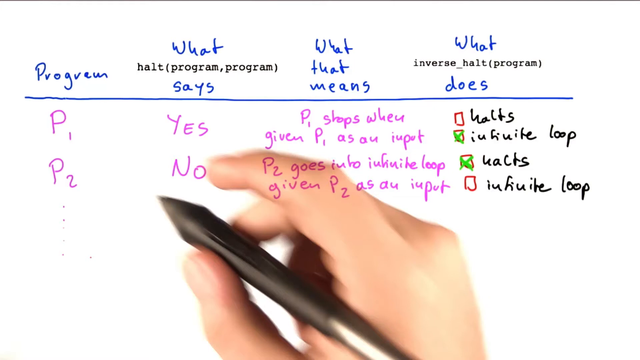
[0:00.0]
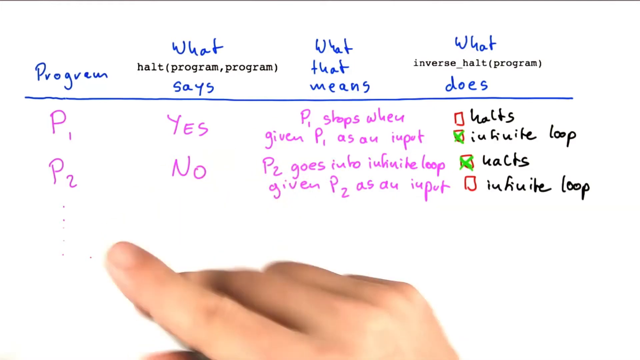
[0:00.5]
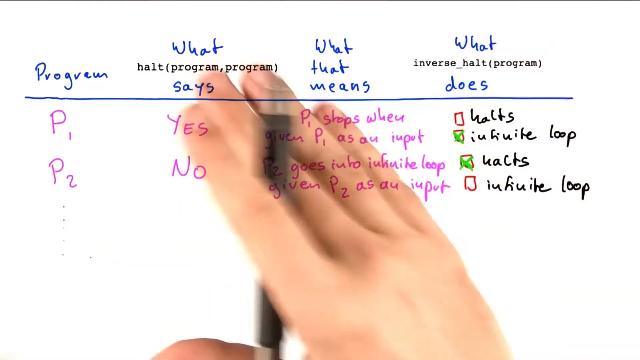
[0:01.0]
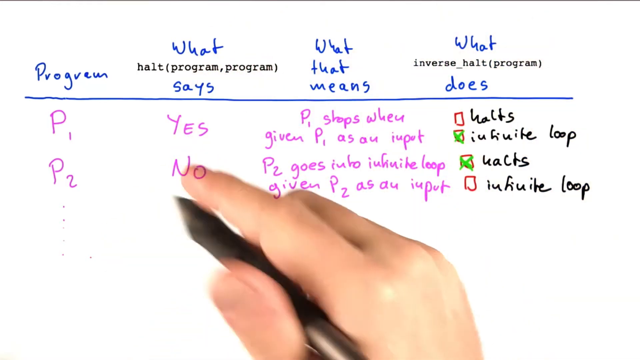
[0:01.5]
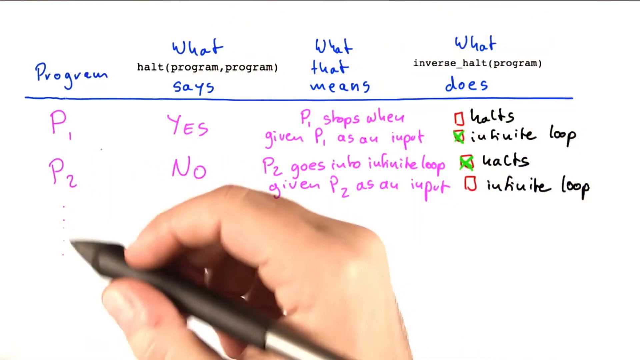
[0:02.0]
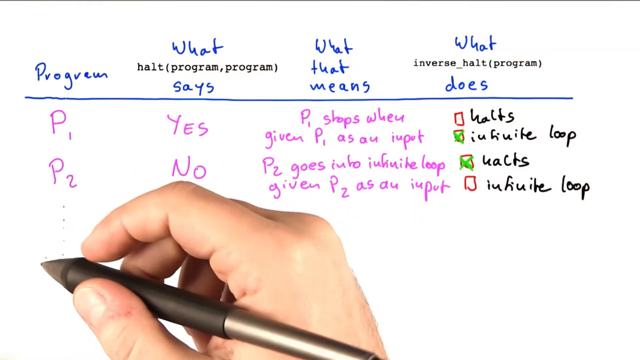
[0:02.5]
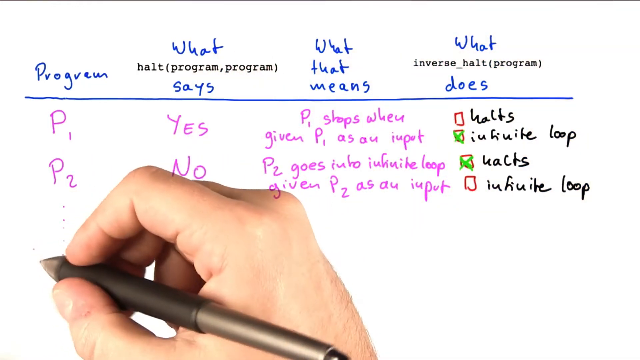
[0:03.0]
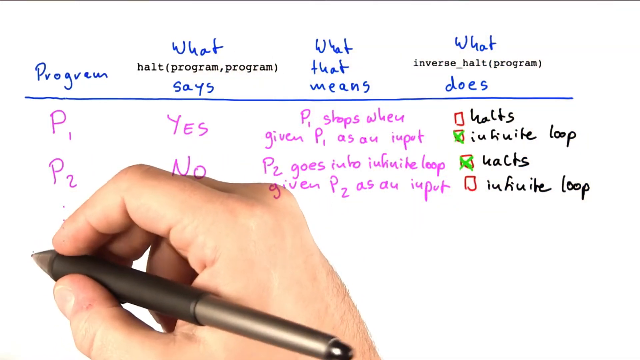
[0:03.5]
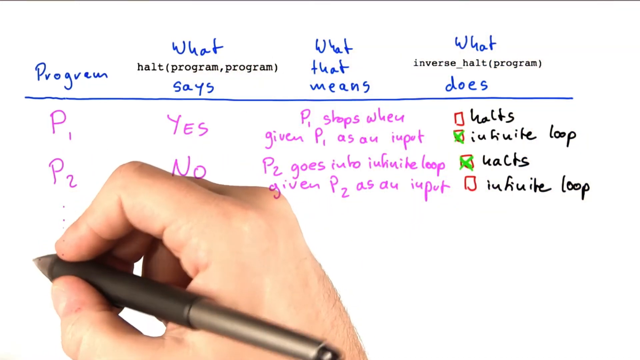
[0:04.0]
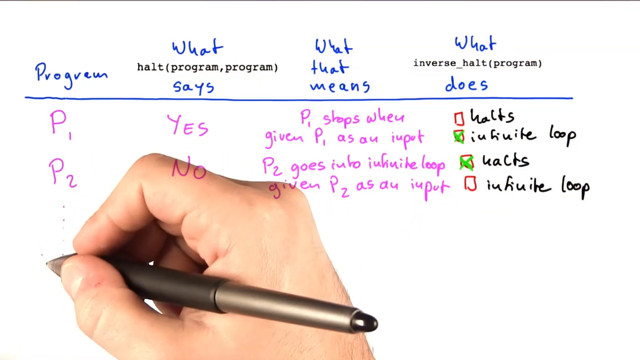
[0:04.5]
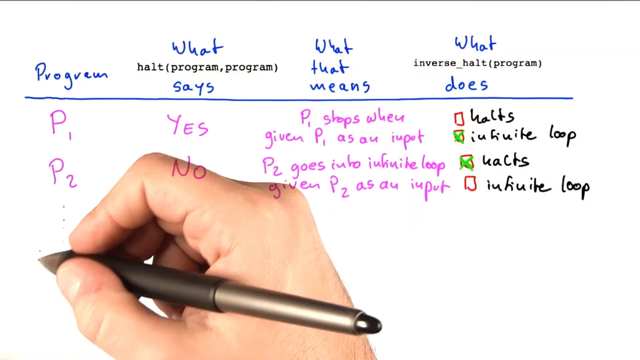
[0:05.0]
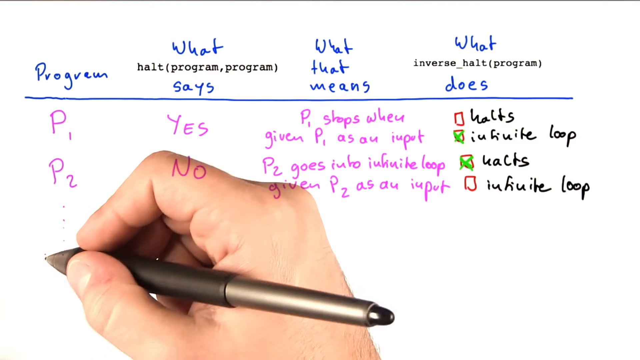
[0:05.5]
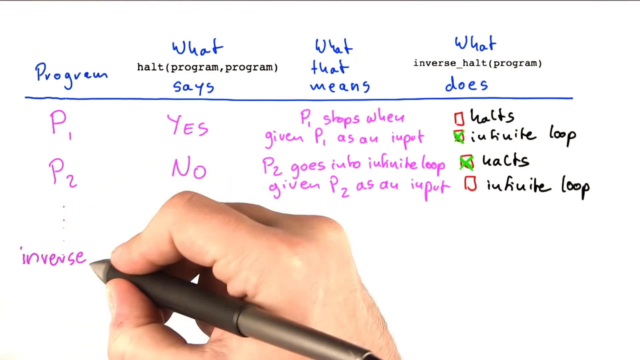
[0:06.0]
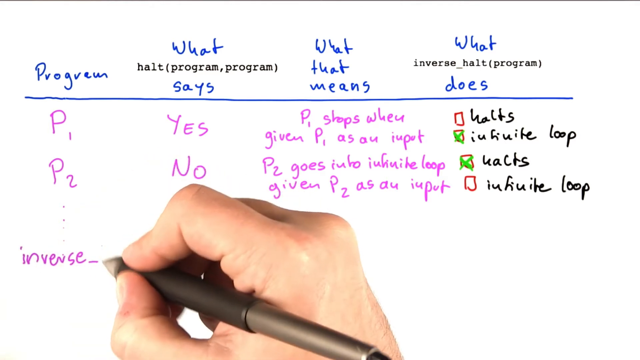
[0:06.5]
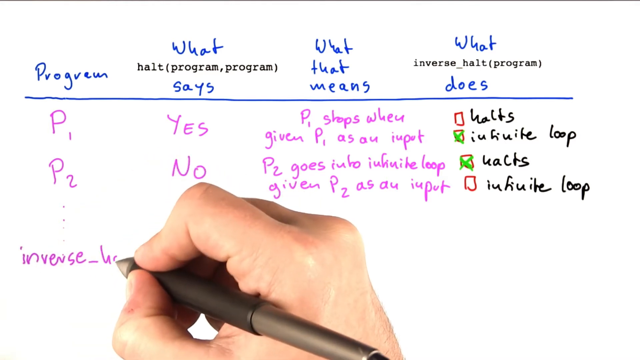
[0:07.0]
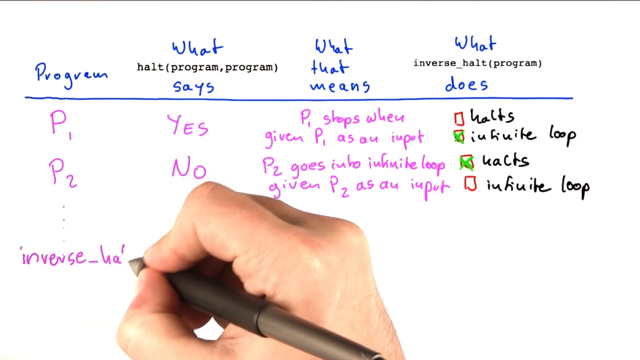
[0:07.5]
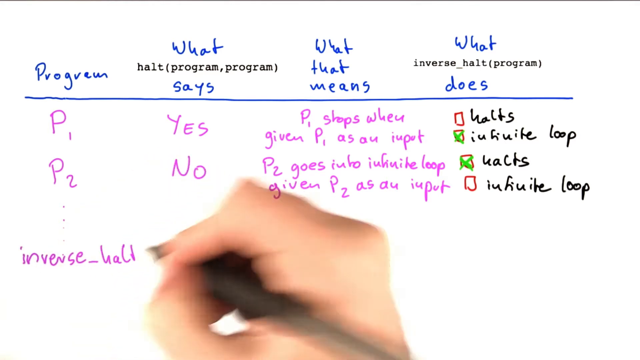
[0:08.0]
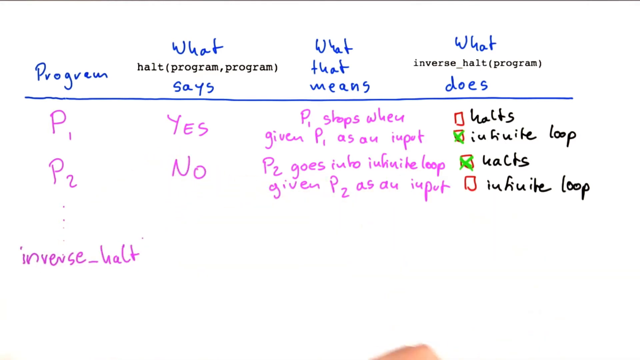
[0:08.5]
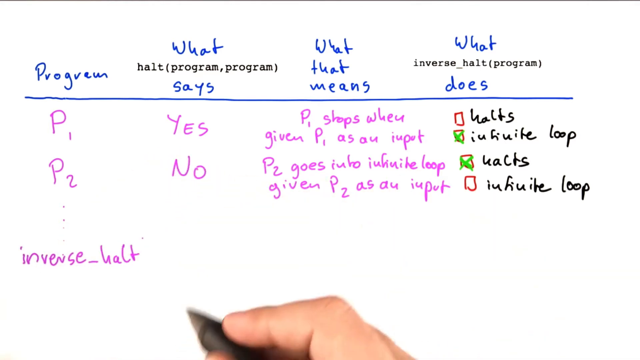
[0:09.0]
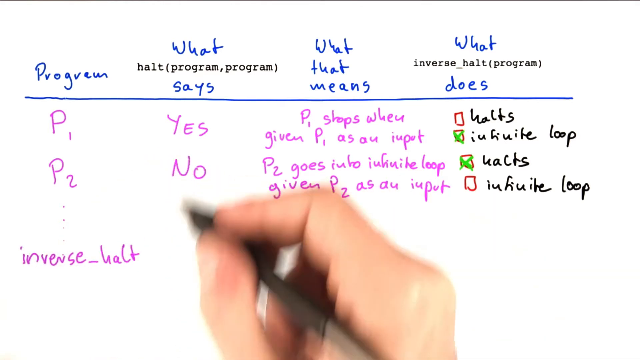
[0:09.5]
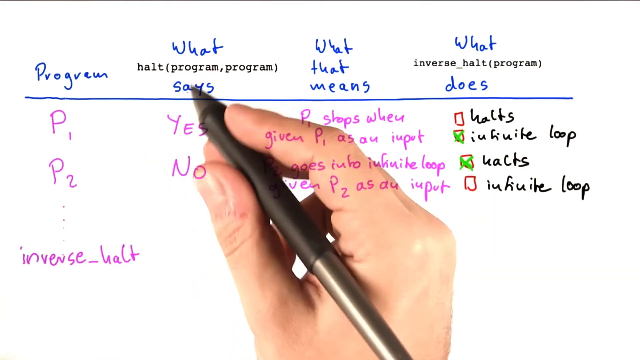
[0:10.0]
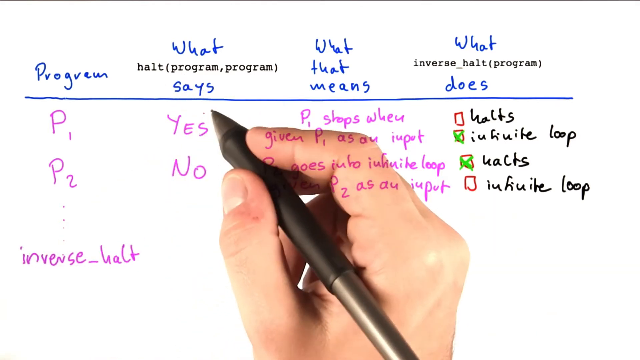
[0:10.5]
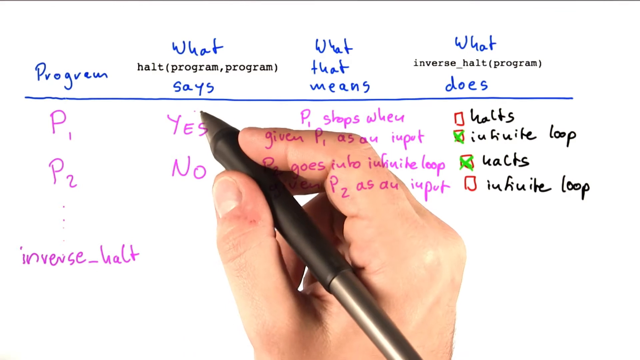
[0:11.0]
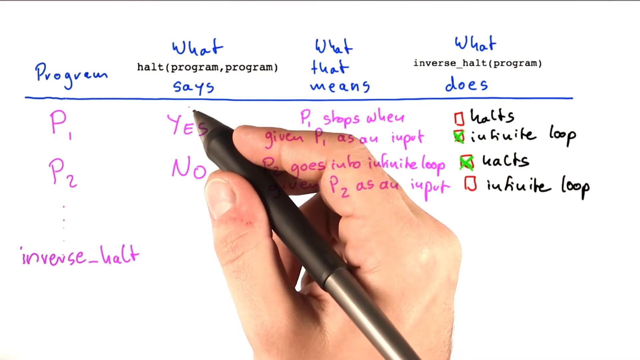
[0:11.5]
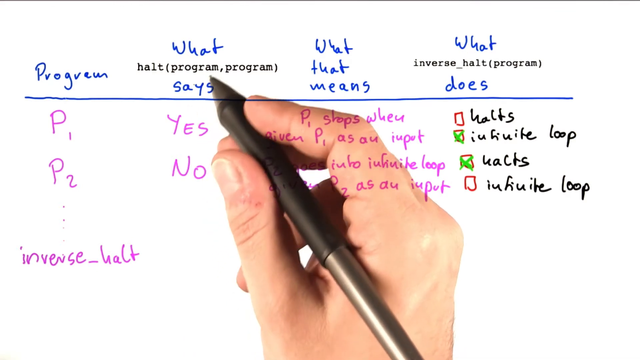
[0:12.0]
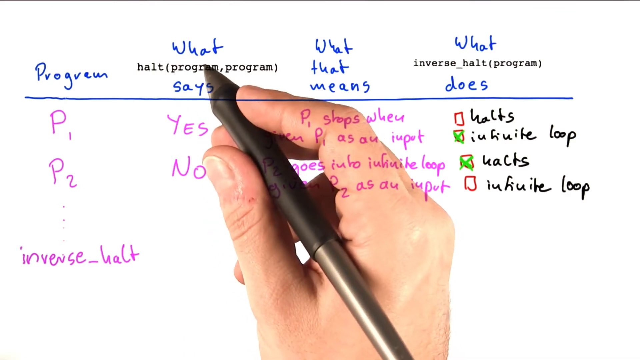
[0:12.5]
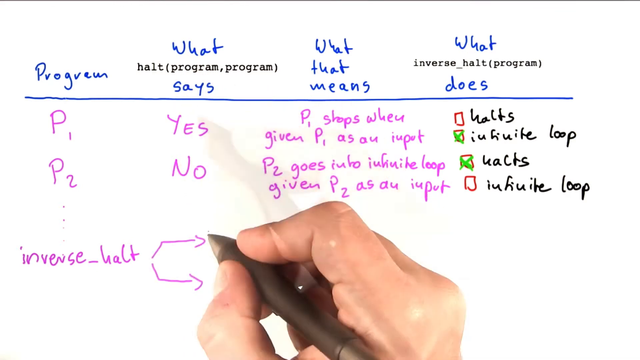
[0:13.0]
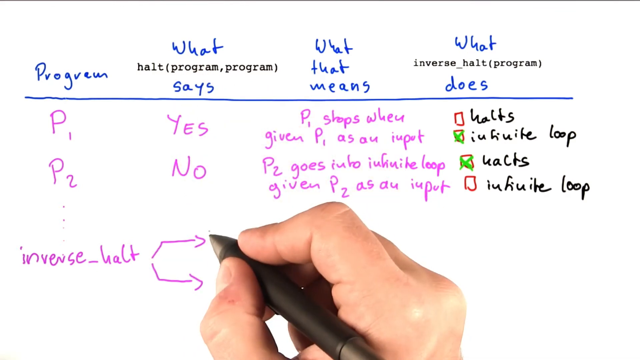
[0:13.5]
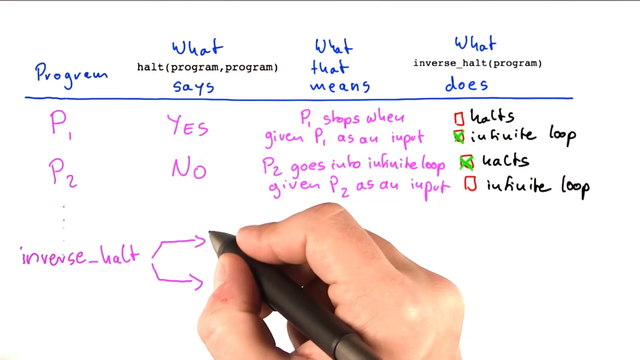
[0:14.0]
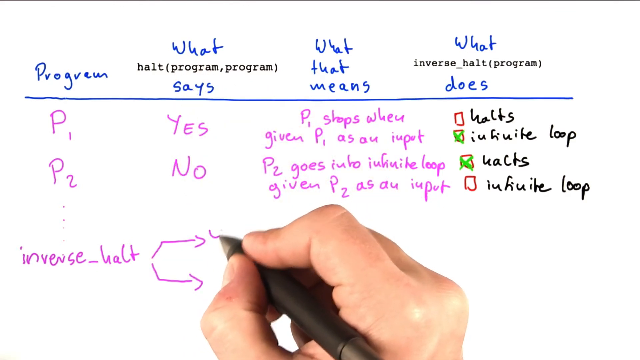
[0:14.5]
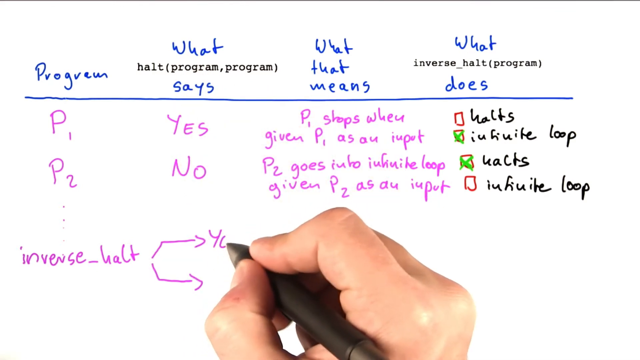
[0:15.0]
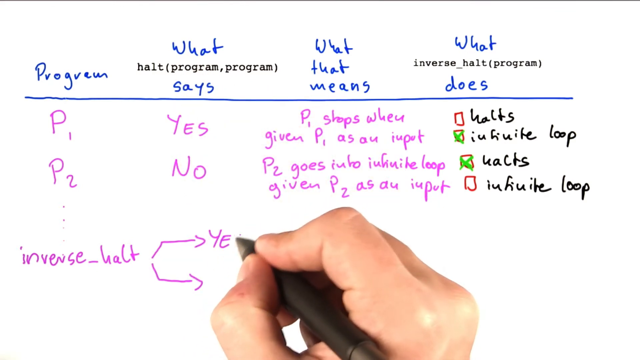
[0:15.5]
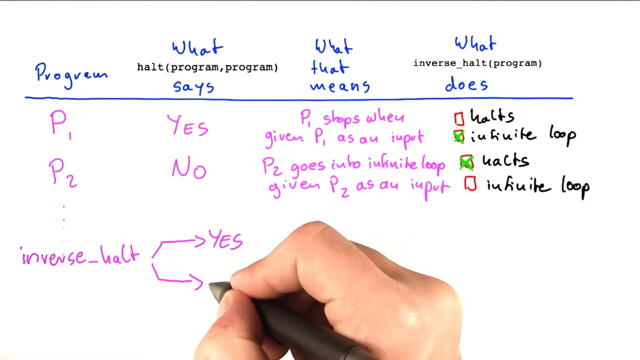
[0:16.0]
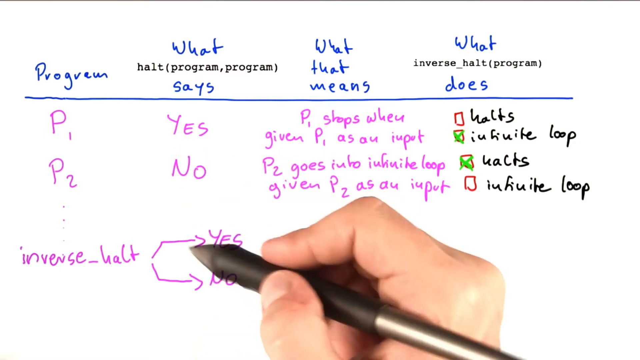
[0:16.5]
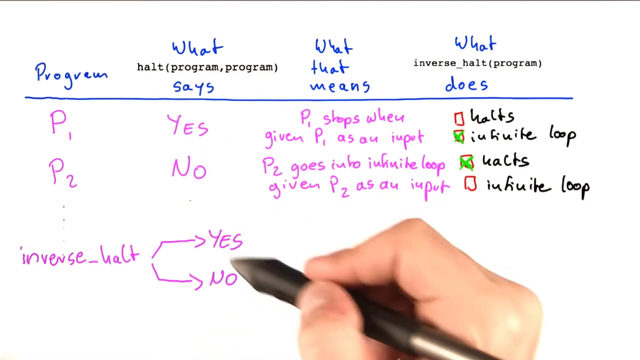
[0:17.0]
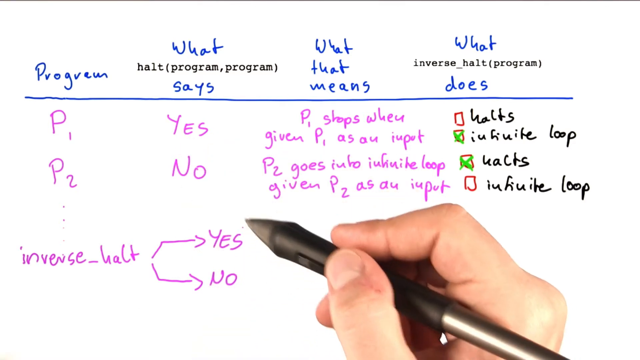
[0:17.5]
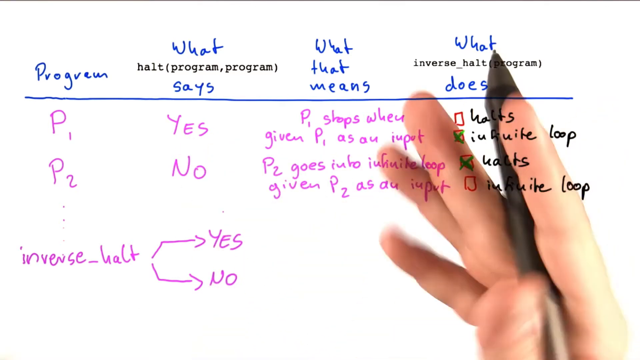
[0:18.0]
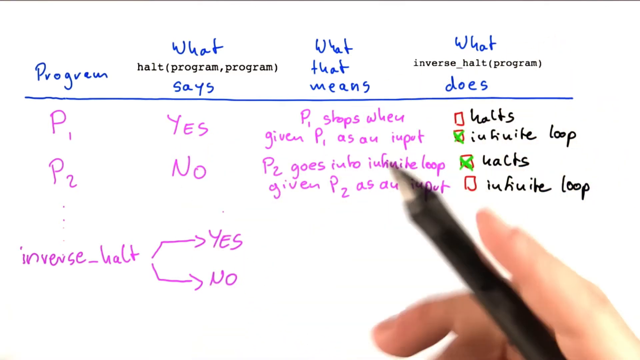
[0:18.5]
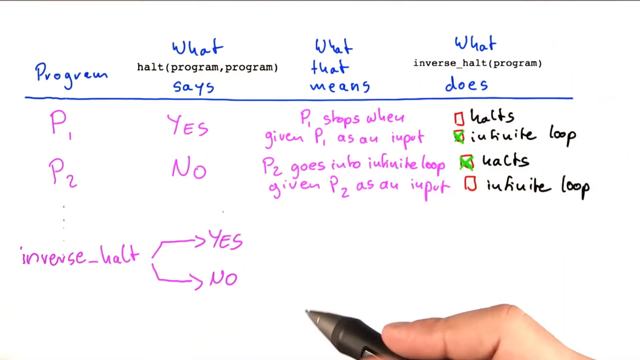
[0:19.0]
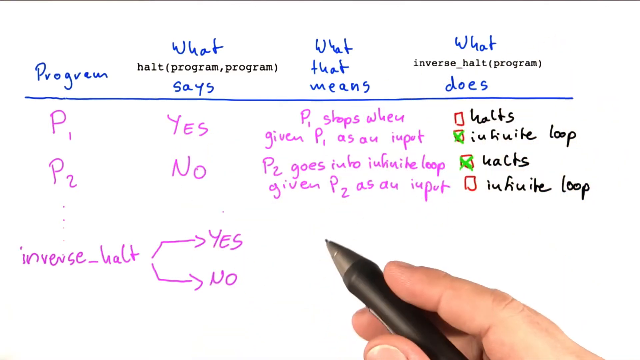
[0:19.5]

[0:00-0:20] A person writes on a whiteboard. Black text reads "HALT (program, program)" and "inverse_HALT (program)", and the writing on the board appears in blue, purple, green and red as the person moves their hand around. Under "program" are P1 and P2. Under "what says" are yes and no. In the third column, under "what that means", it reads "P1 stops when given P1 as an input" and "P2 goes into infinite loop given P2 as an input". The "what does" column shows halts and infinite loop; for P1, infinite loop is marked with a green check mark in that box, and for P2, halts has a green X on it. The person then writes inverse_halt below, draws a branching pair of arrows, and writes yes and no.